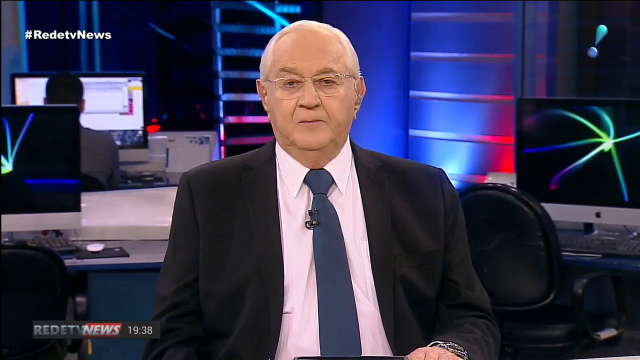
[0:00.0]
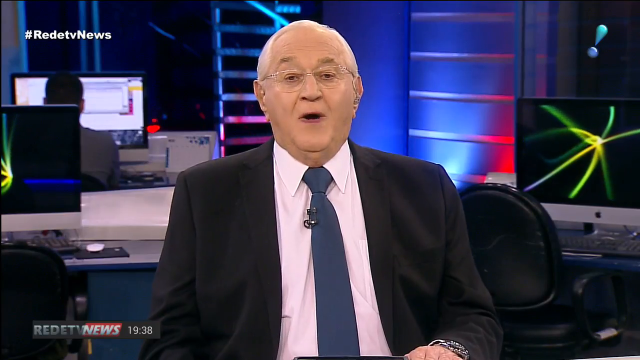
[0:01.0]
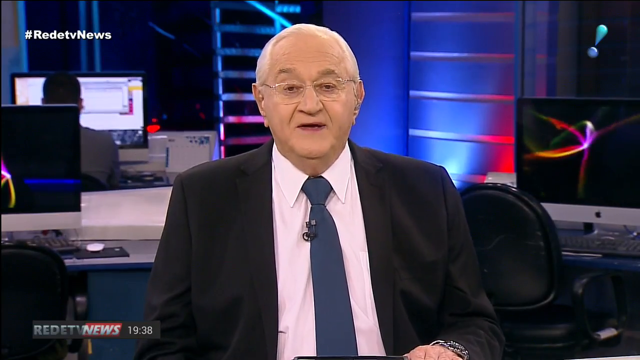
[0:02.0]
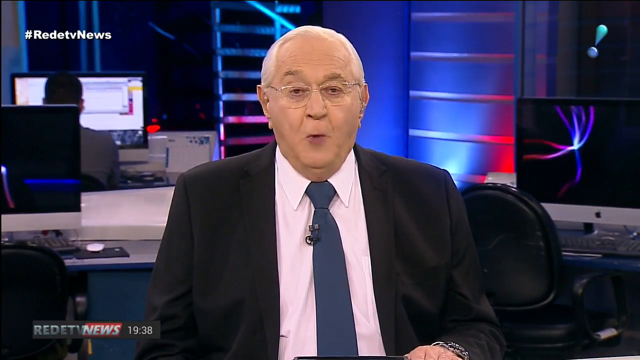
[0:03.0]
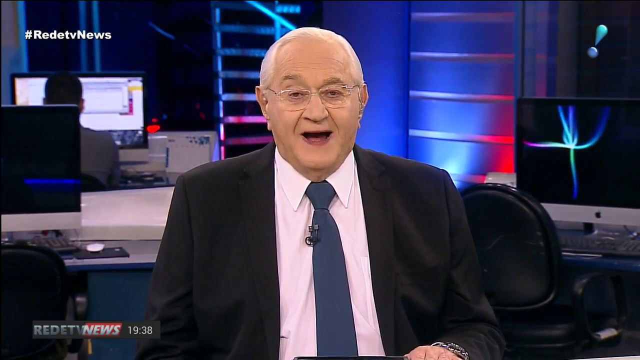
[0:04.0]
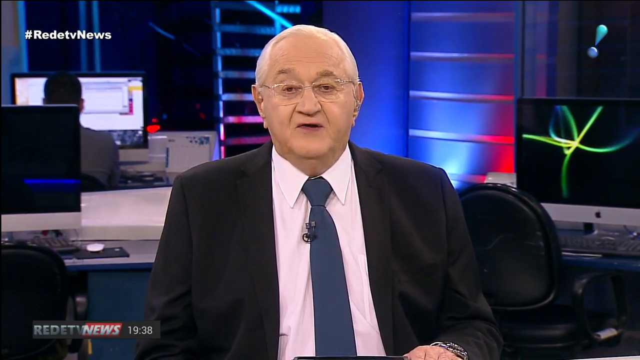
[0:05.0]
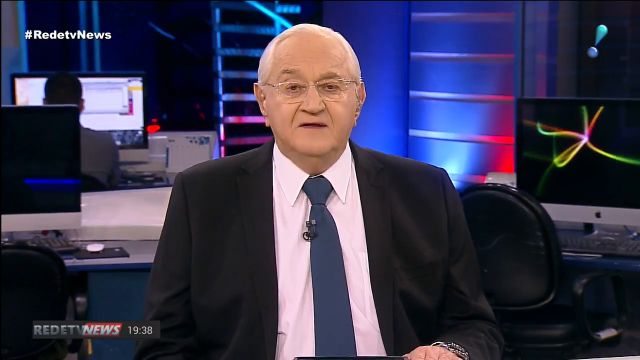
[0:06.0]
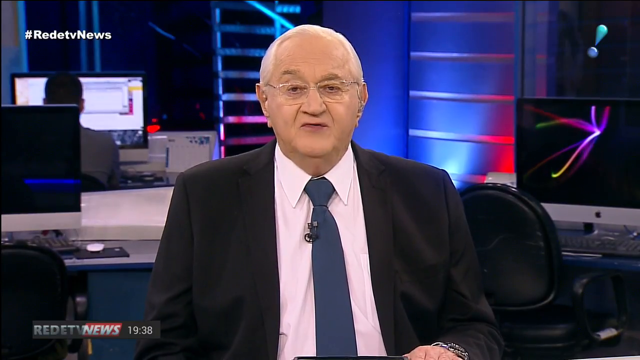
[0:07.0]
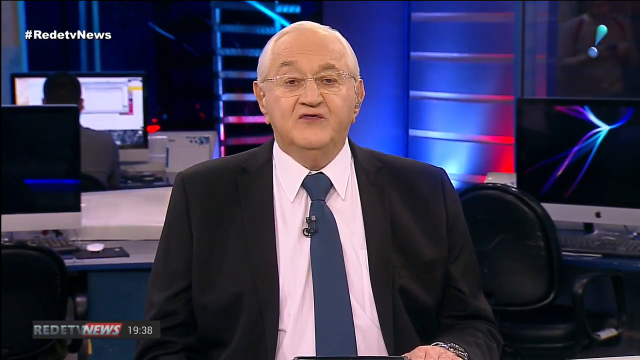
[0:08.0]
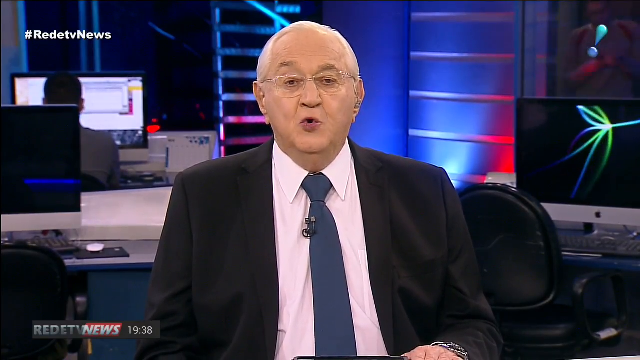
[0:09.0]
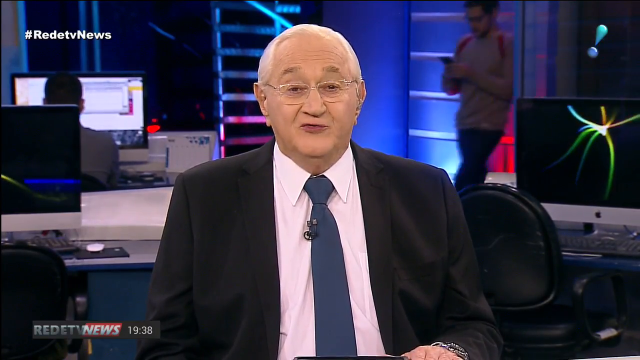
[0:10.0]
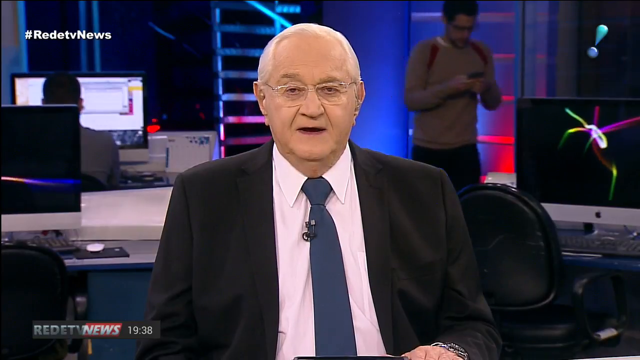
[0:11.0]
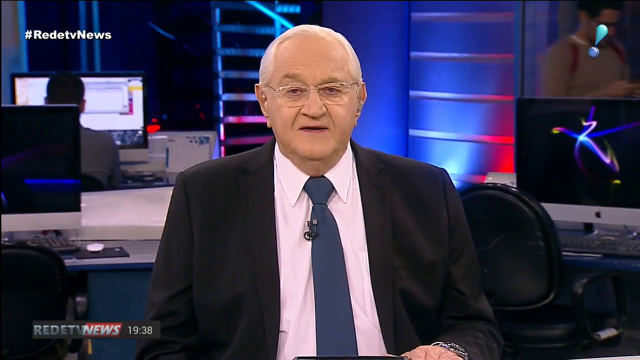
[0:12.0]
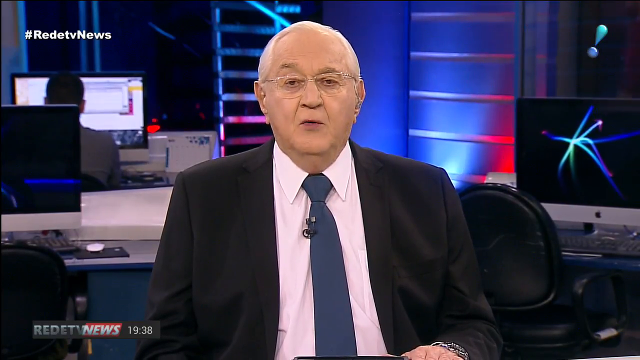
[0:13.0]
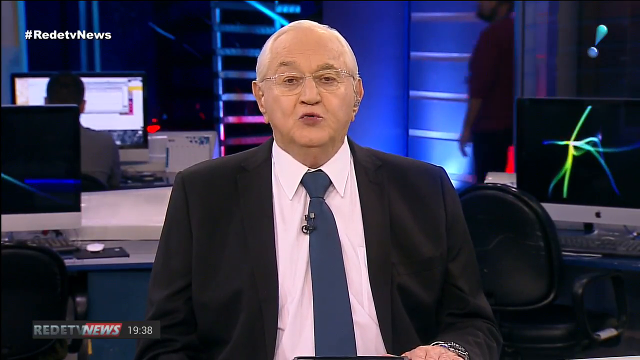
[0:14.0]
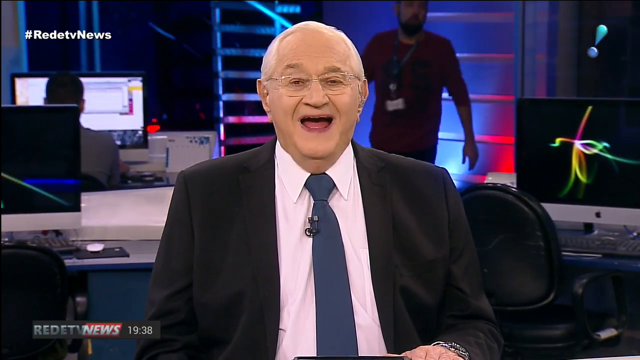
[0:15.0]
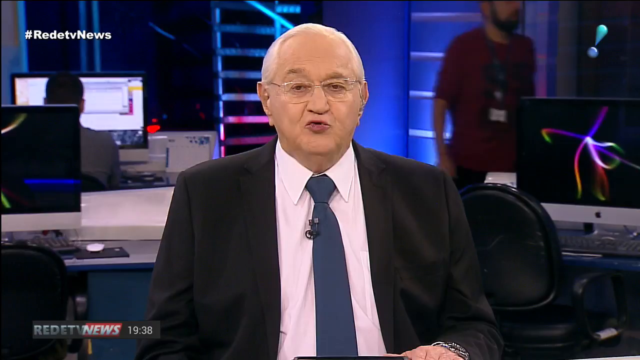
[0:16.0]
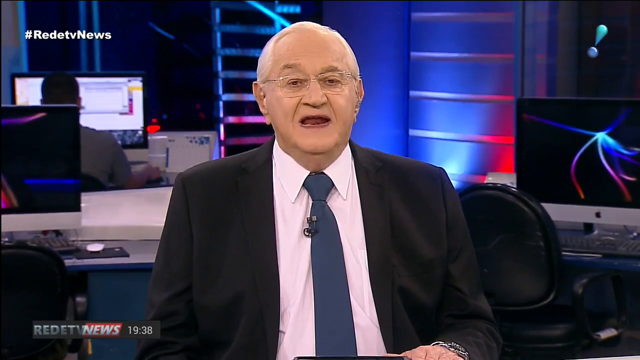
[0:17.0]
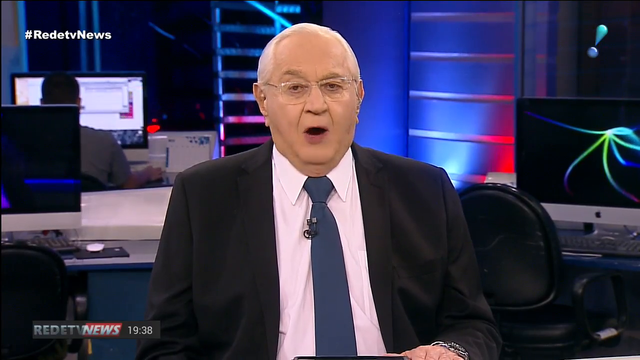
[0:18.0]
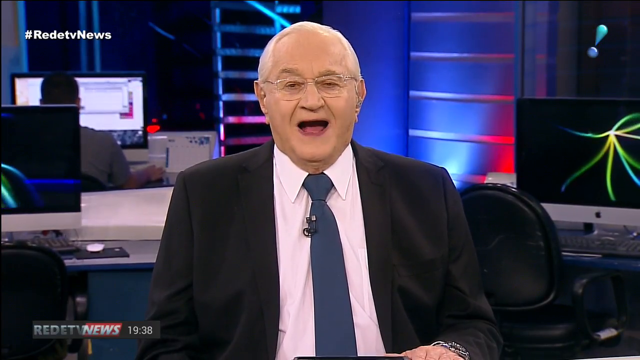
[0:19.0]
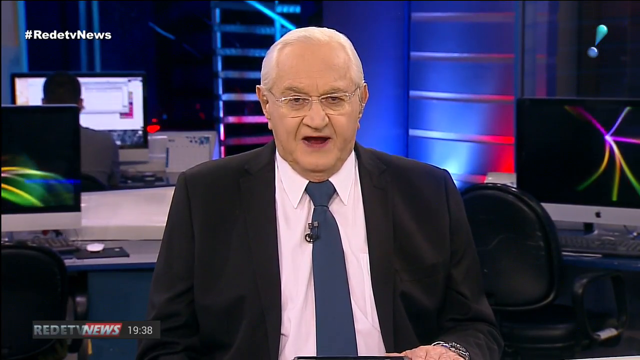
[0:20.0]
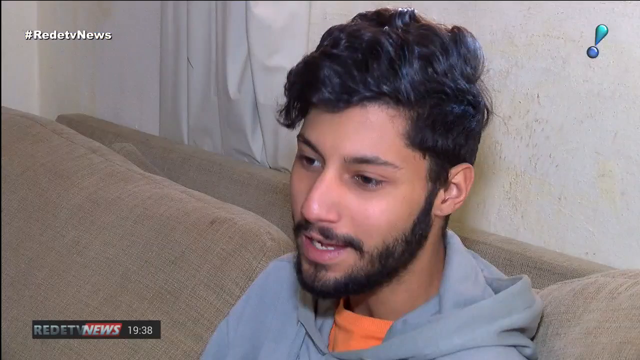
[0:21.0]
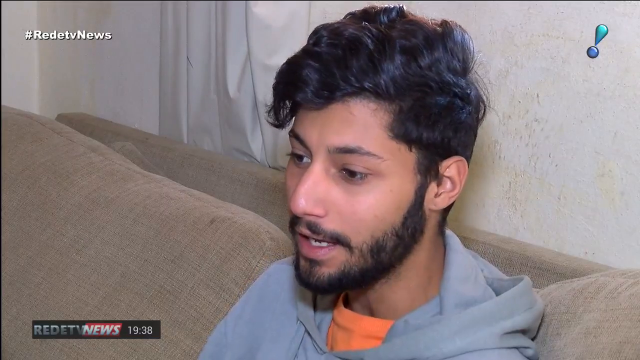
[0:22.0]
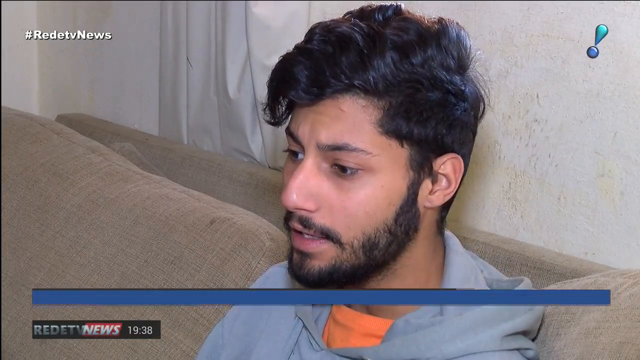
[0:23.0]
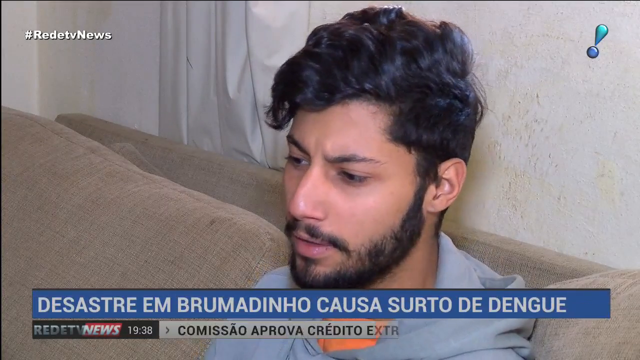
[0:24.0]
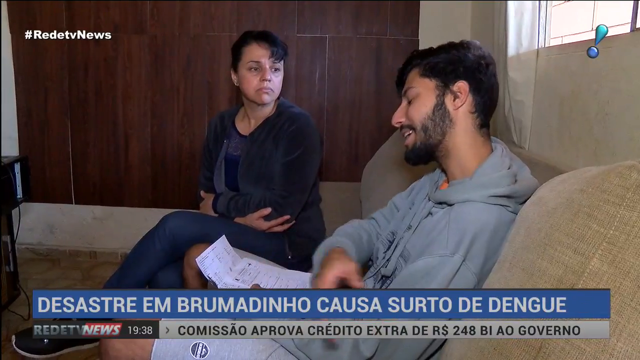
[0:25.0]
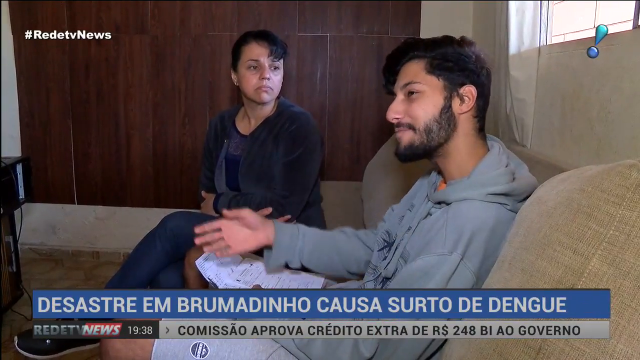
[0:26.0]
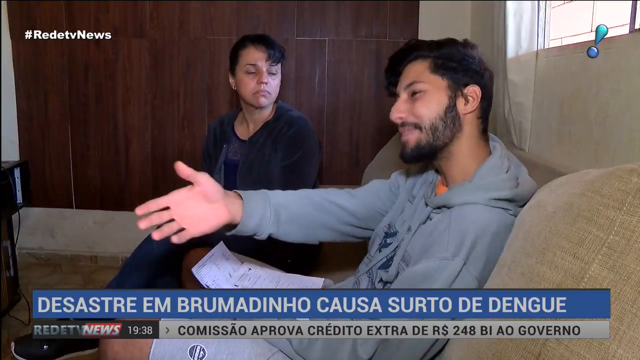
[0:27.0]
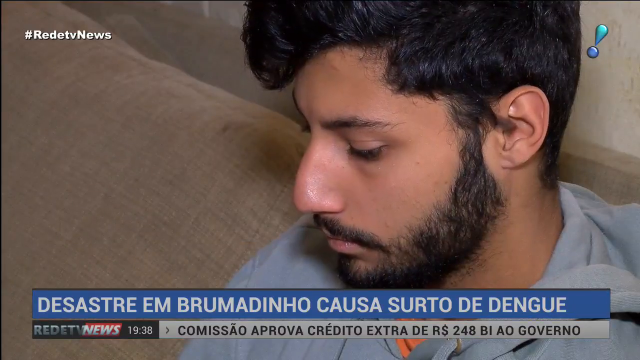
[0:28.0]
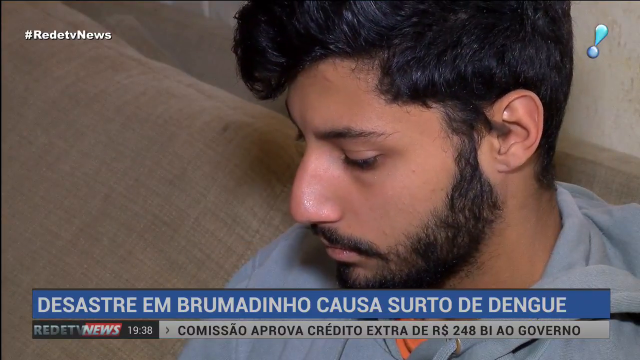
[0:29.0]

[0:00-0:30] An older man, probably in his 80s, is behind a news desk in what appears to be a newsroom, possibly one covering stocks, somewhat like CNBC. He wears a black suit, a white shirt and a blue tie. It is Reddy TV News. Computer monitors are behind him, and there are a lot of desks; two of the monitors just show a screensaver. Behind him, a person works at their computer monitor, another man has a news tag on a lanyard around his neck, probably showing he is part of the news, and someone walks by with a phone and a backpack on. The video then cuts to a home where a person is being interviewed. The people appear possibly Arab: a man, maybe around 20 years old, and what looks like his mother sitting on a couch. Words in a different language appear at the bottom of the screen.